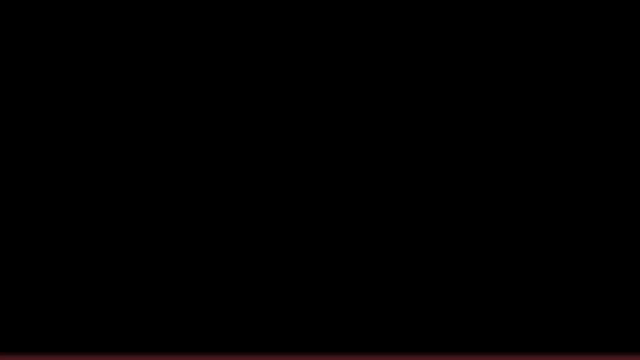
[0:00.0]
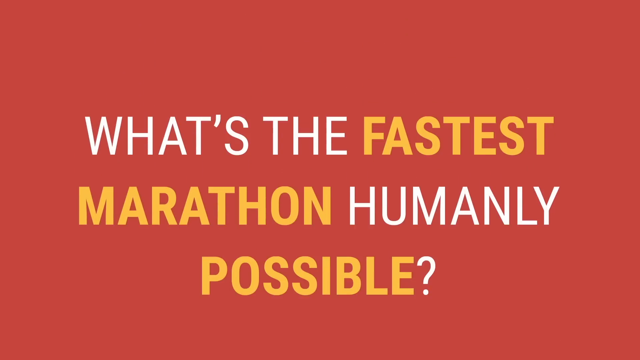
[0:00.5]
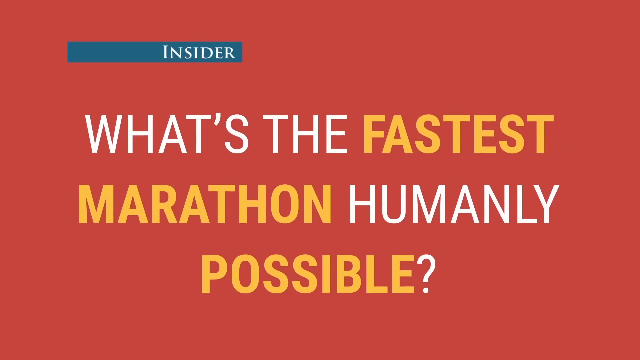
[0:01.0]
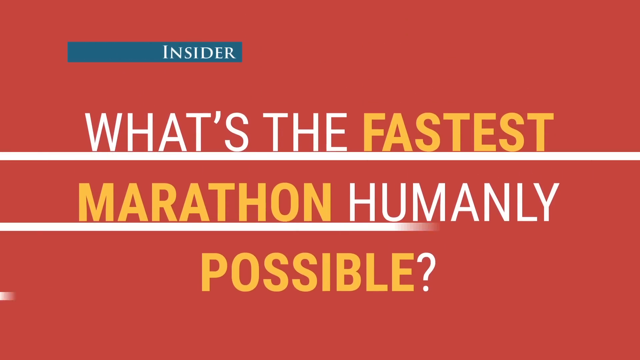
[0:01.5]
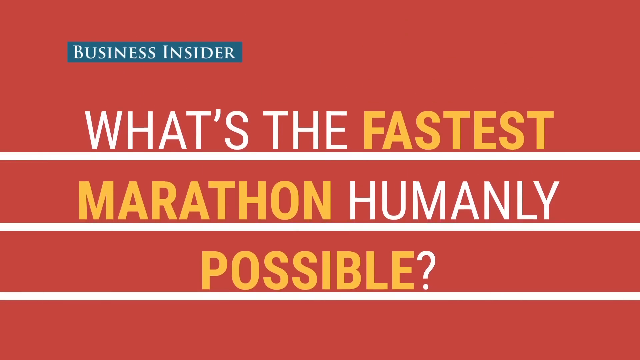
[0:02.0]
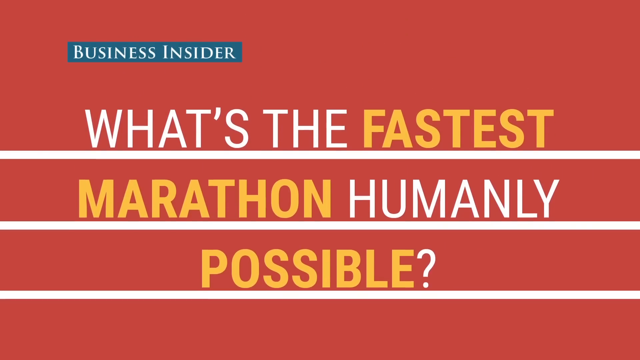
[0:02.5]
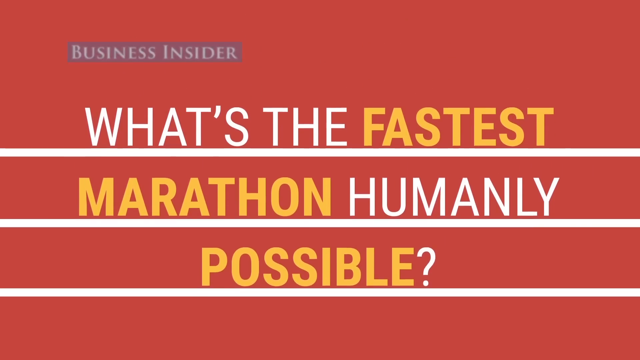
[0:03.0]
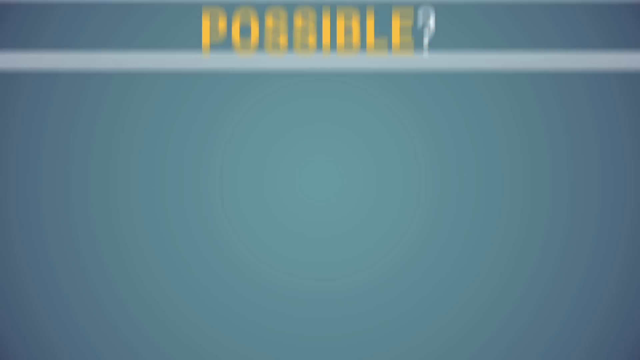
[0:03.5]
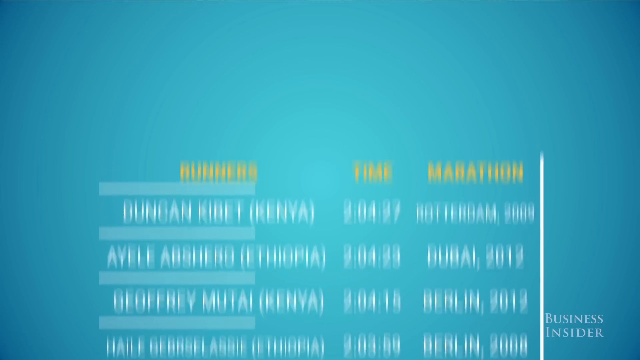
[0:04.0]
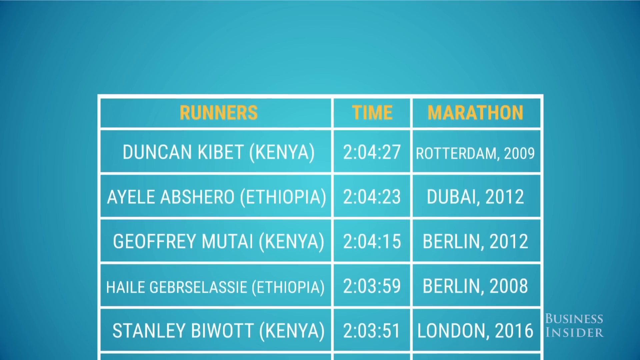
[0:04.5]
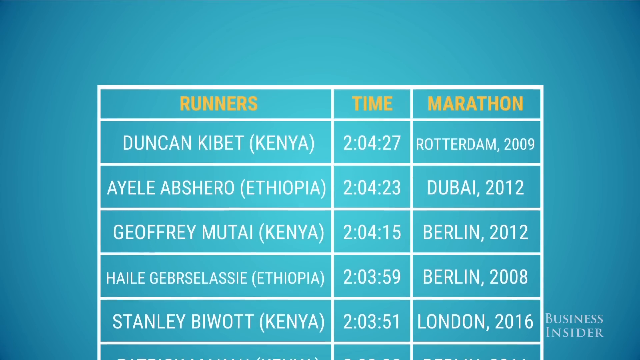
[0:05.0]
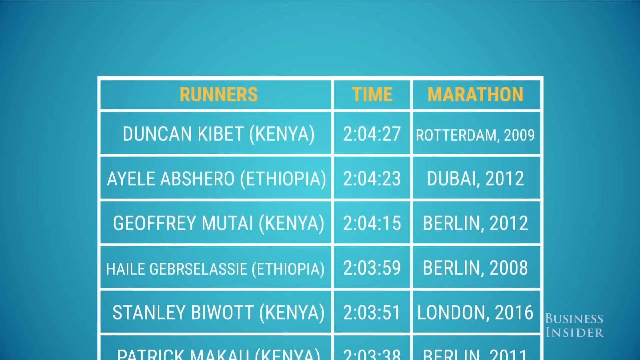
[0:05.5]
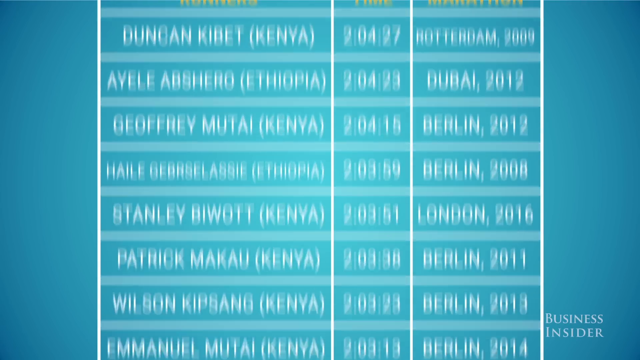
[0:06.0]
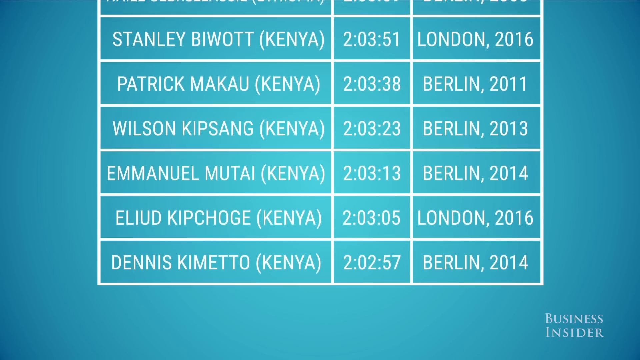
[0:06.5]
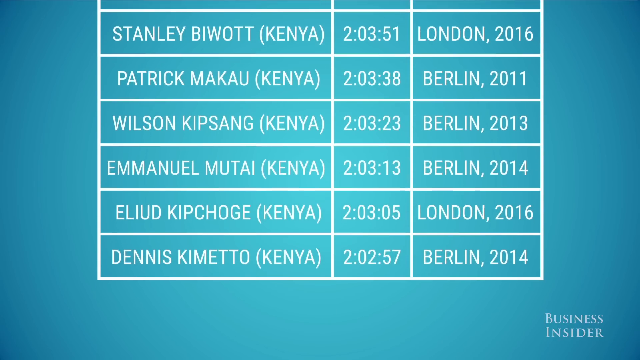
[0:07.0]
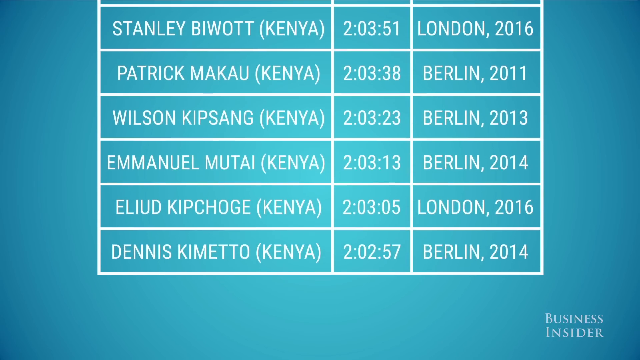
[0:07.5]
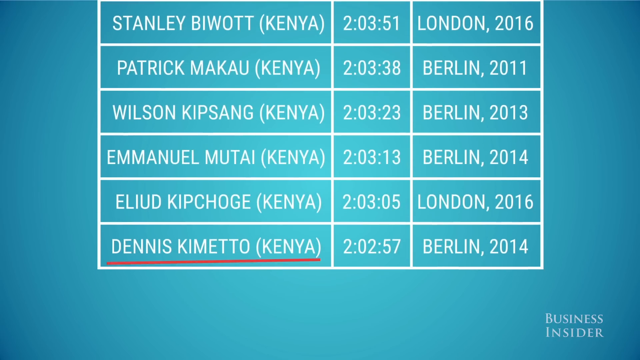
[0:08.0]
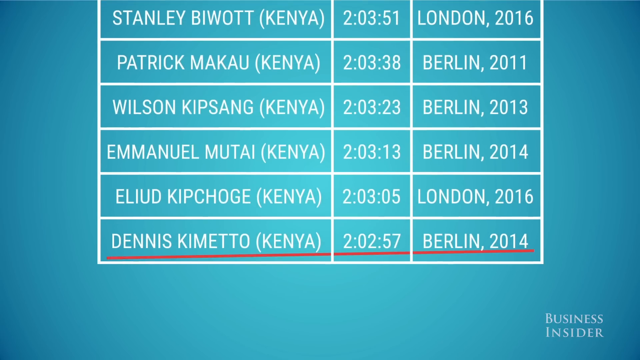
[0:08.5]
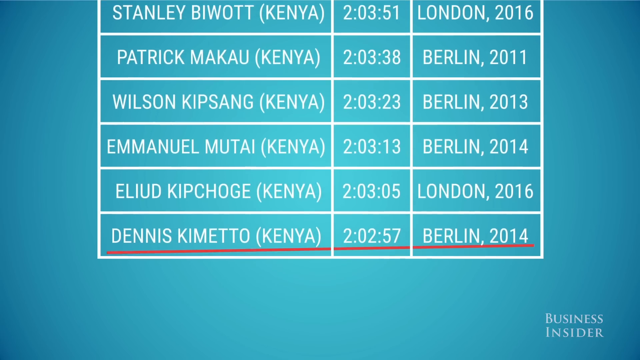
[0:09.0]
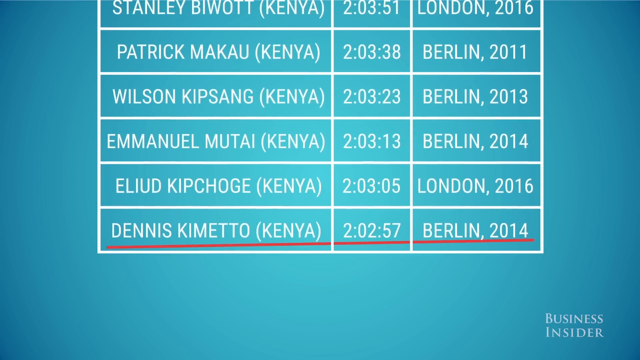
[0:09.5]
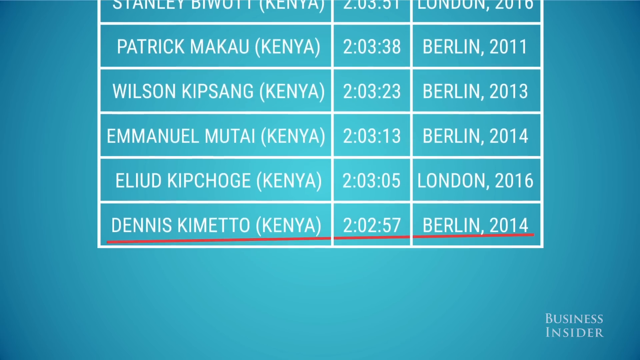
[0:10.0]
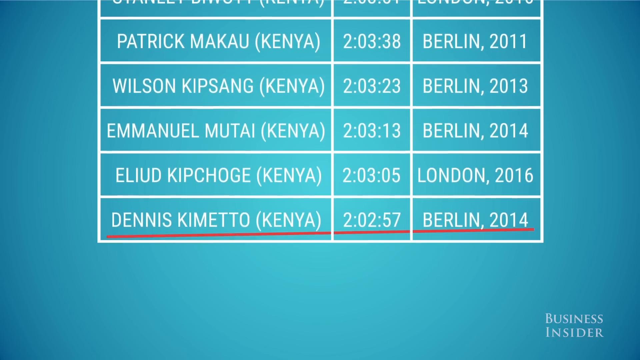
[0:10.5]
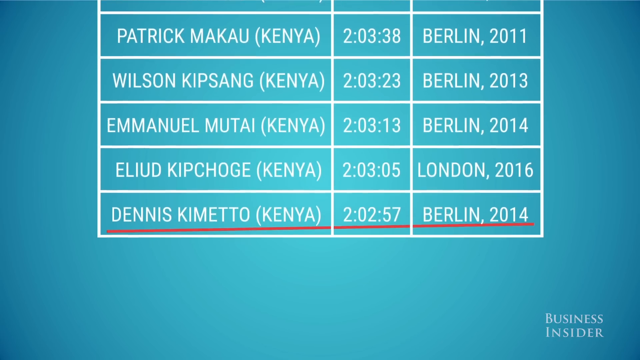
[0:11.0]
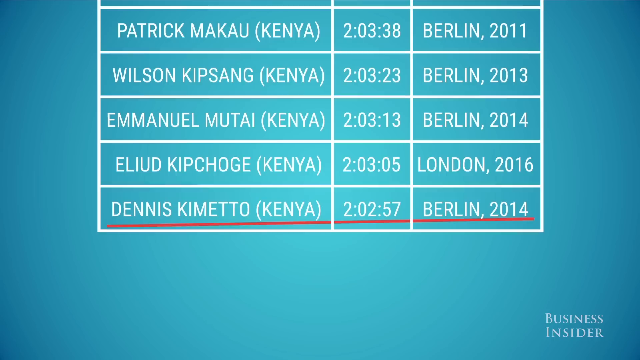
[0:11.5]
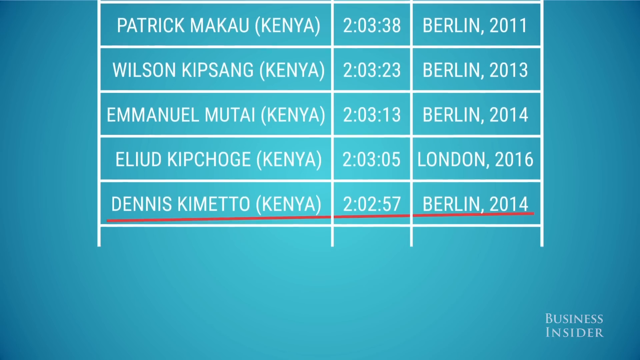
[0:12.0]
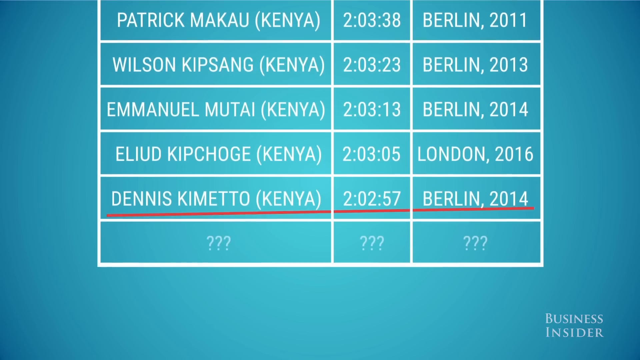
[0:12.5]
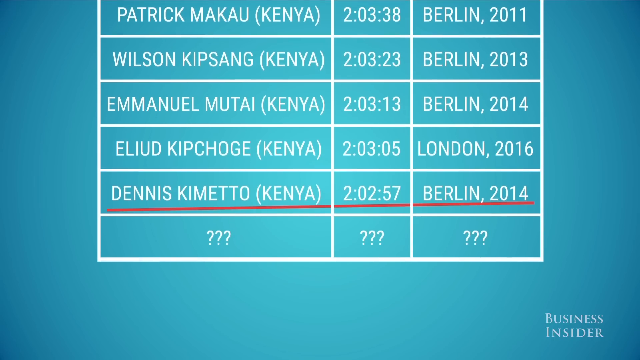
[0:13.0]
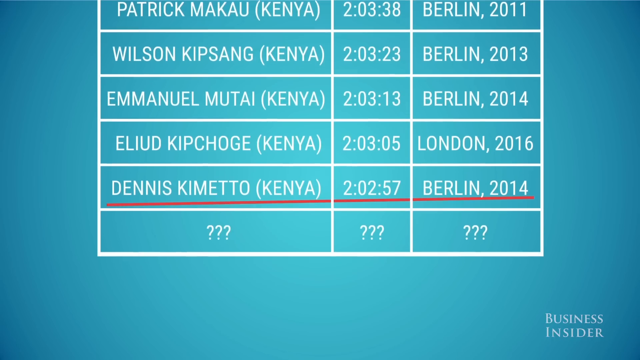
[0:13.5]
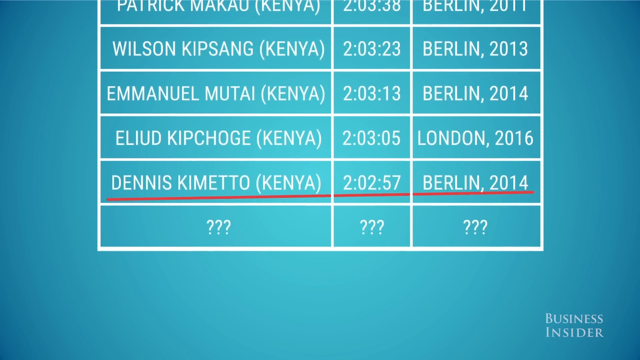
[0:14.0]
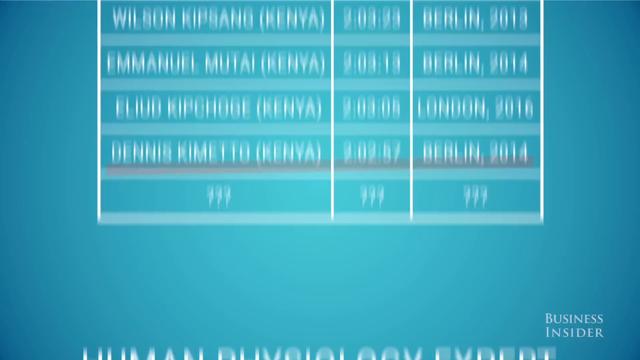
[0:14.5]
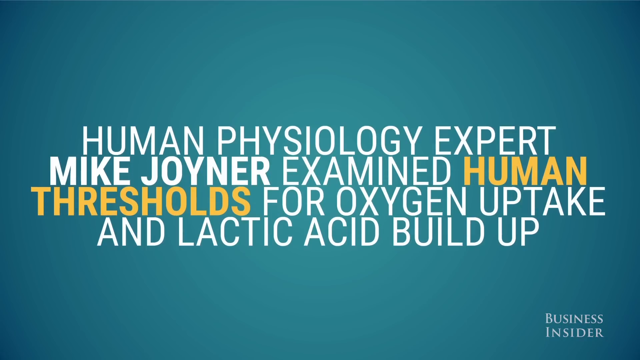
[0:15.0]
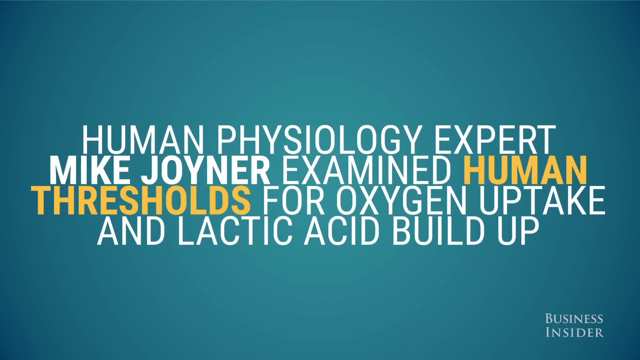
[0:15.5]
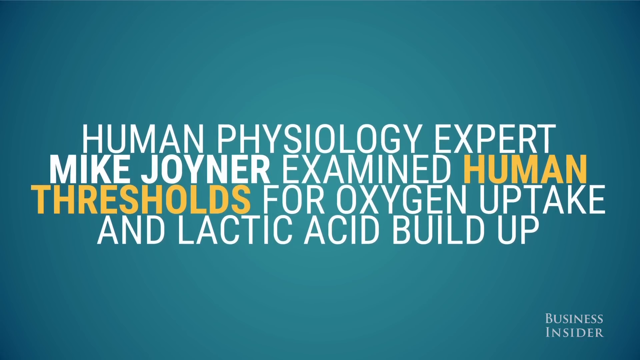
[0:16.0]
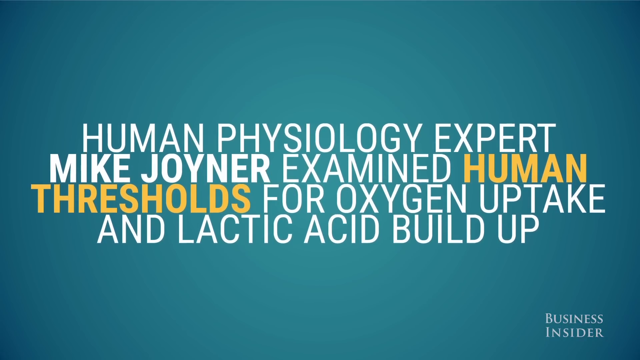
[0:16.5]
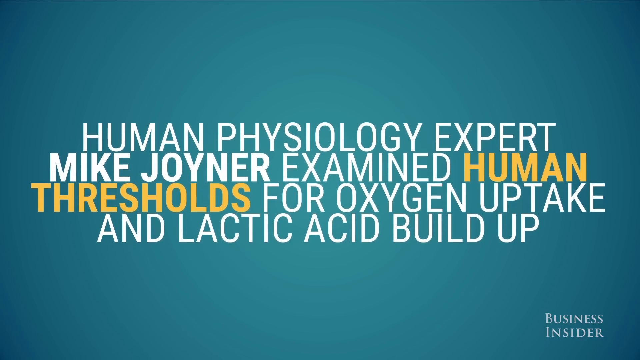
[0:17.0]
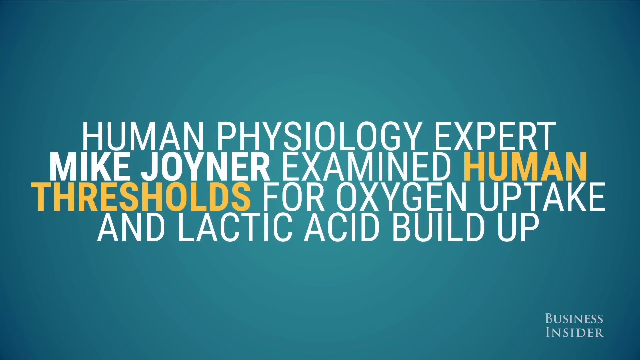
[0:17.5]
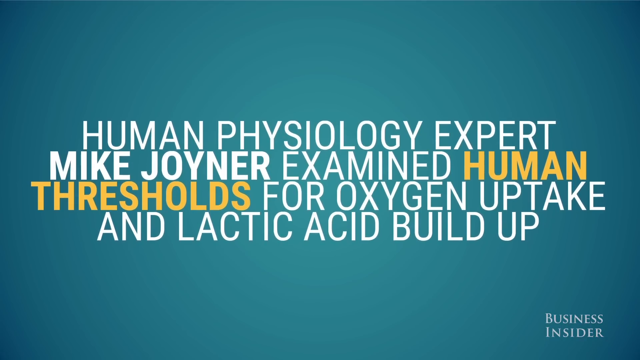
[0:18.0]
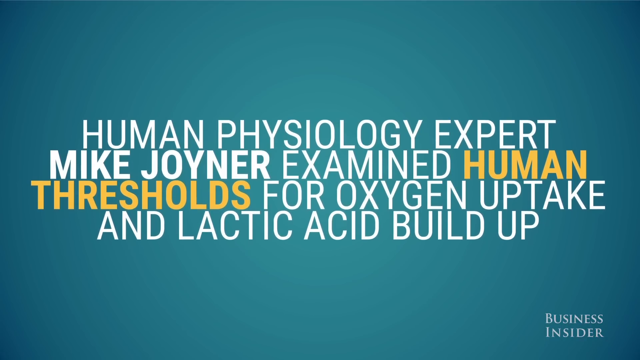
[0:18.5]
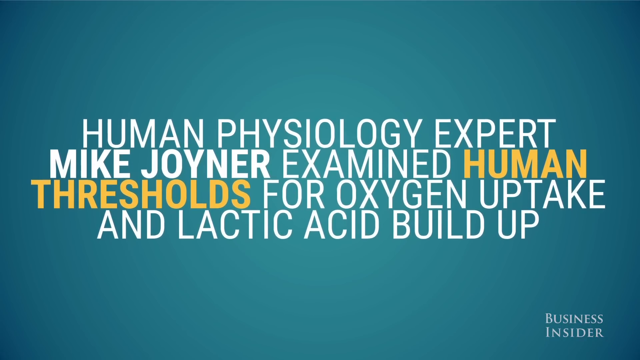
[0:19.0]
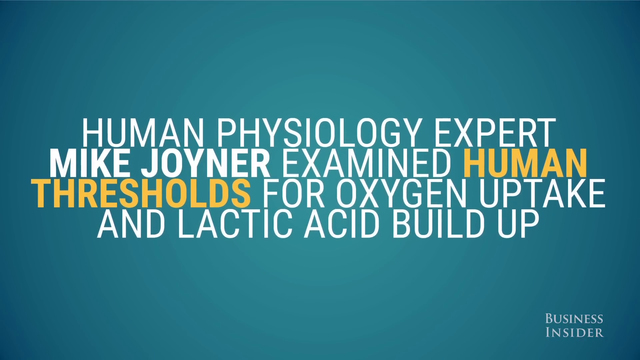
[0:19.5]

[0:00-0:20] The video opens with the title "what's the fastest marathon humanly possible" by Business Insider. A list of runners follows: a runner named Duncan from Kenya ran it in 2 hours, 4 minutes and 27 seconds in 2009; a runner from Ethiopia ran 2 hours, 4 minutes and 23 seconds in Dubai in 2012; another runner from Kenya ran 2 hours, 4 minutes and 15 seconds in Berlin in 2012; another runner from Ethiopia ran 2 hours, 3 minutes and 59 seconds in the Berlin 2008 marathon; and another runner from Kenya ran 2 hours, 3 minutes and 51 seconds in London in 2016. These are apparently the five listed times on record, most of them a little over 2 hours. Text then reads "human physiology expert Mike Joyner examining human thresholds for oxygen uptake and lactic acid buildup."